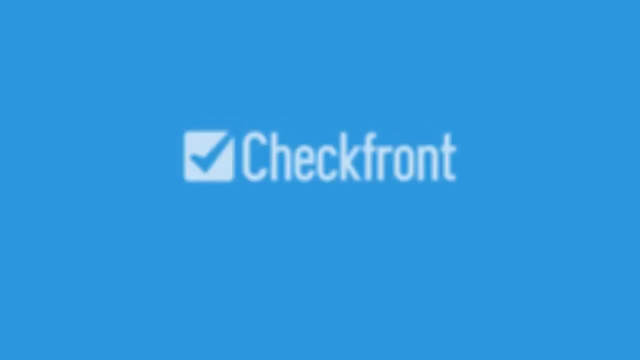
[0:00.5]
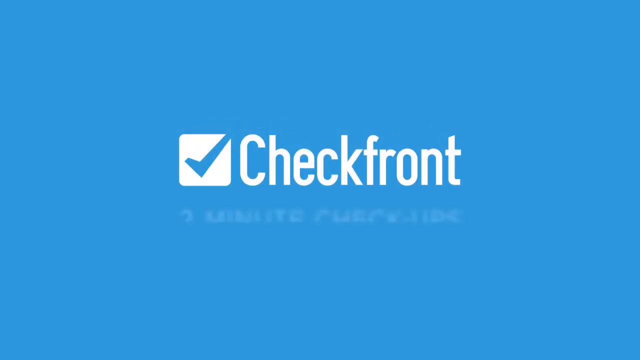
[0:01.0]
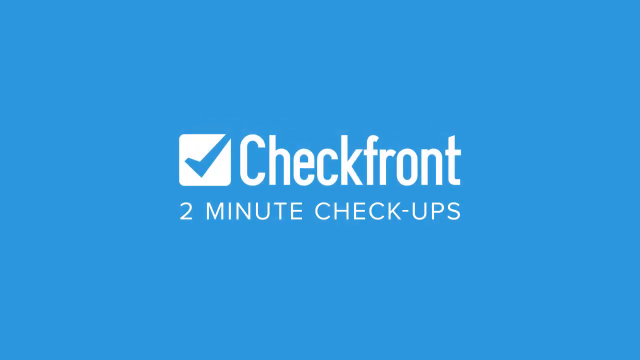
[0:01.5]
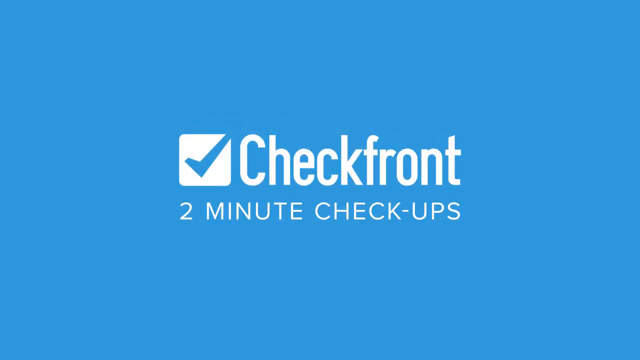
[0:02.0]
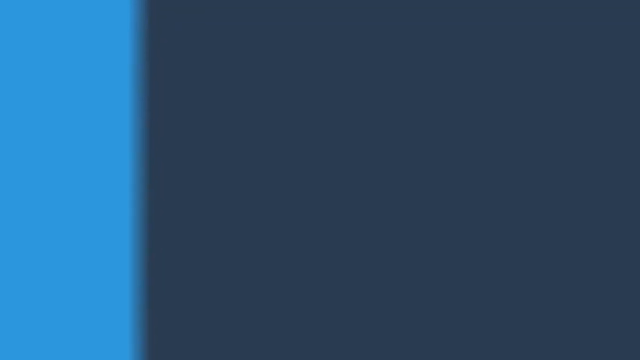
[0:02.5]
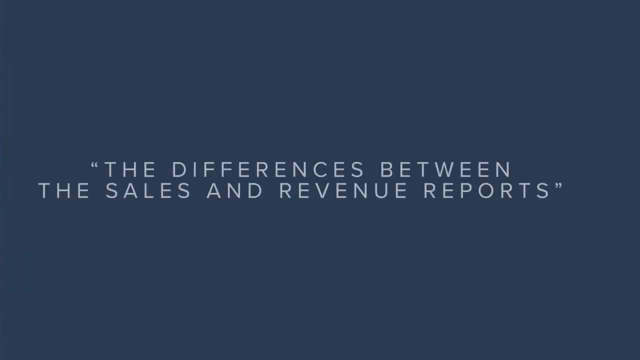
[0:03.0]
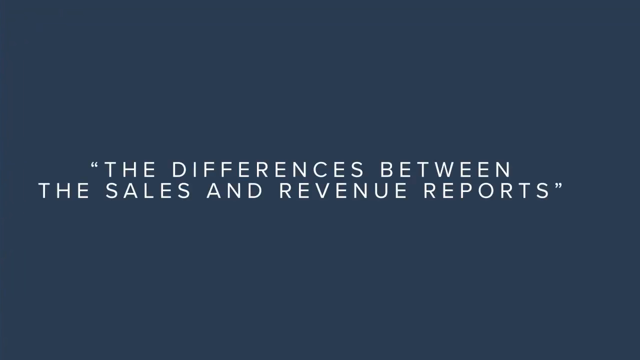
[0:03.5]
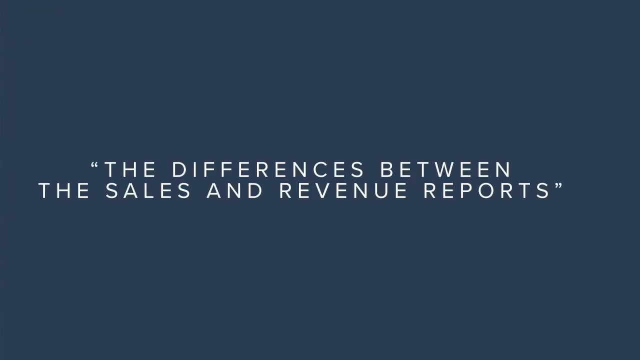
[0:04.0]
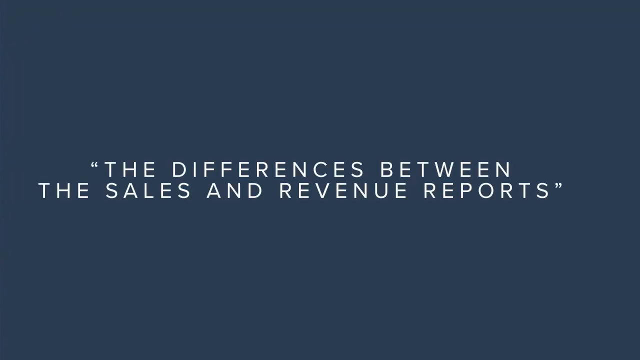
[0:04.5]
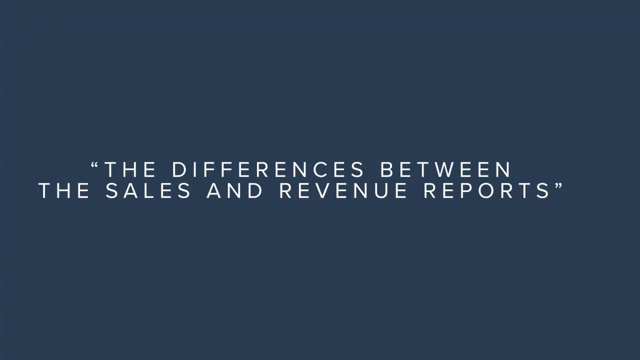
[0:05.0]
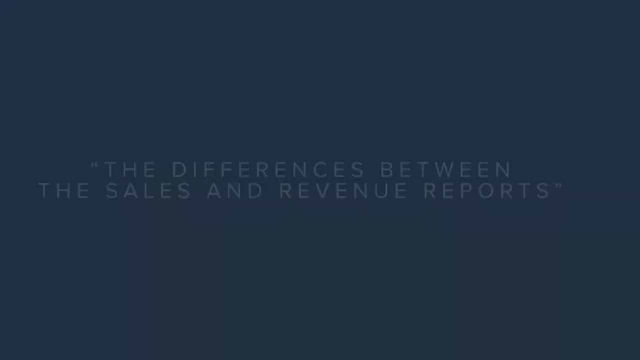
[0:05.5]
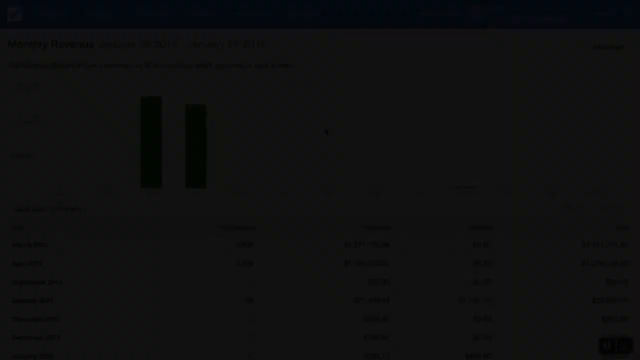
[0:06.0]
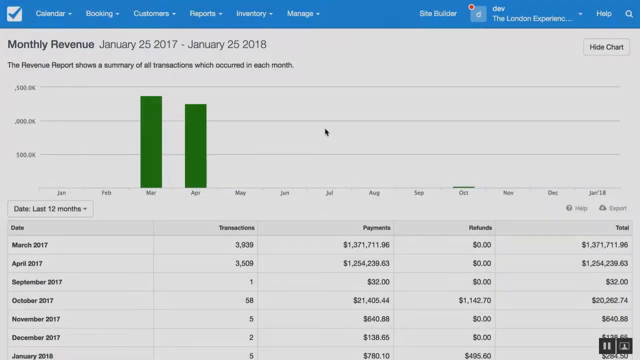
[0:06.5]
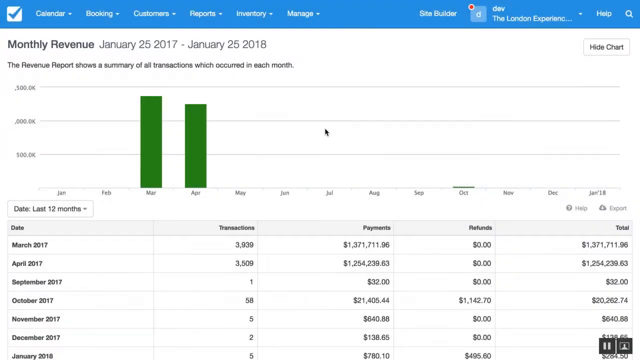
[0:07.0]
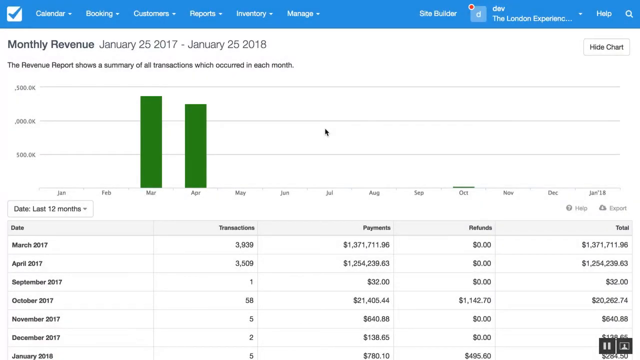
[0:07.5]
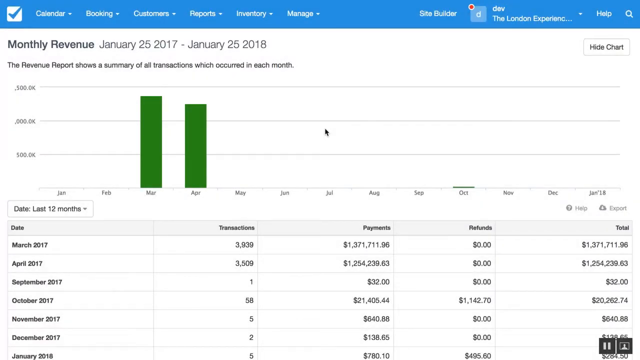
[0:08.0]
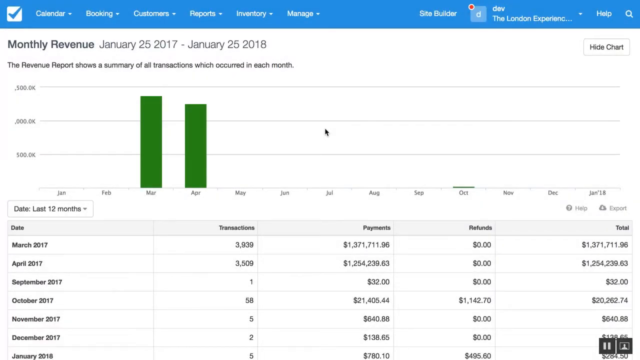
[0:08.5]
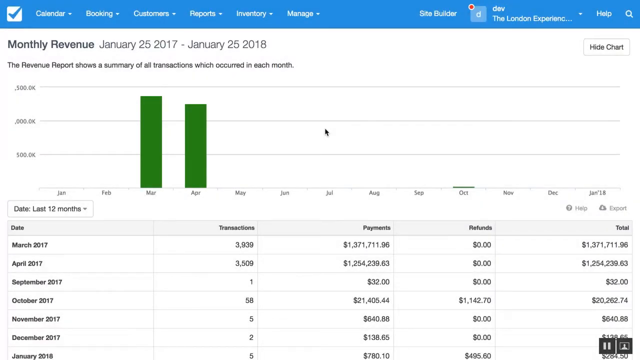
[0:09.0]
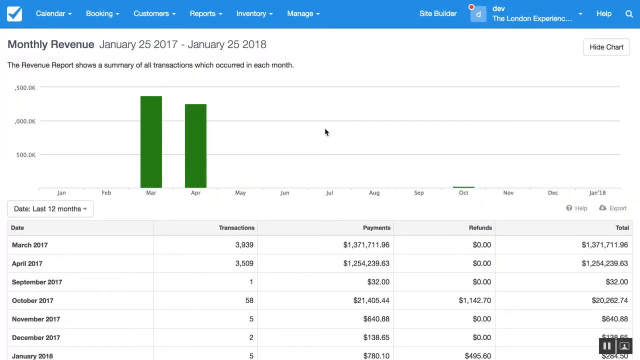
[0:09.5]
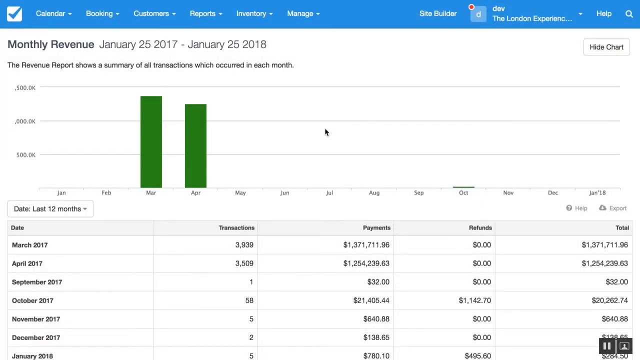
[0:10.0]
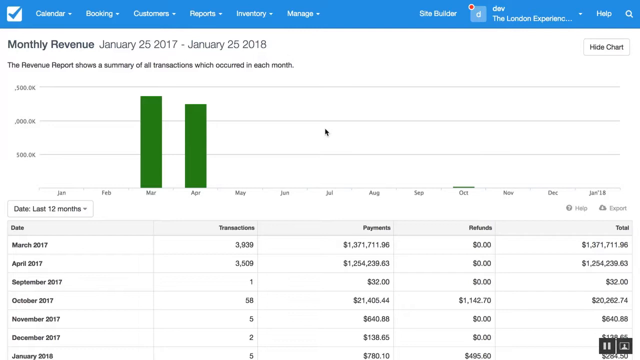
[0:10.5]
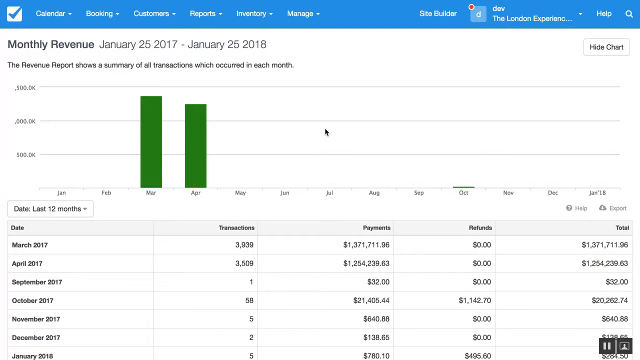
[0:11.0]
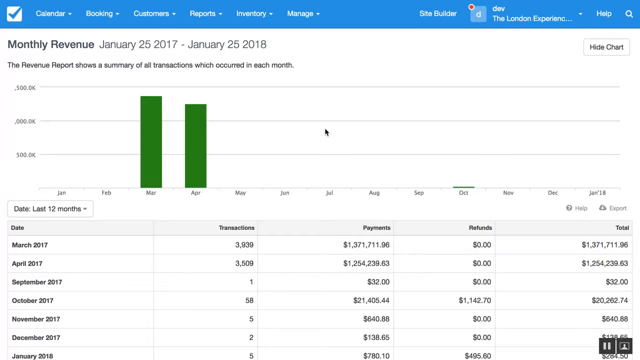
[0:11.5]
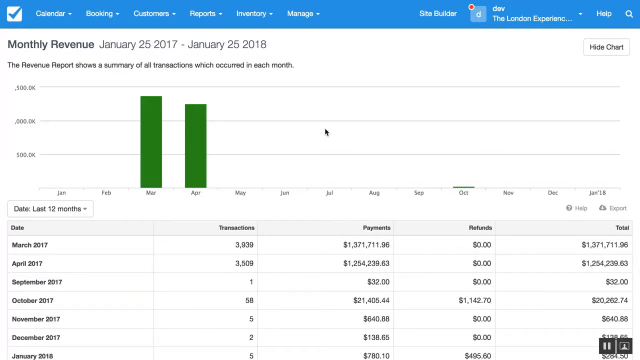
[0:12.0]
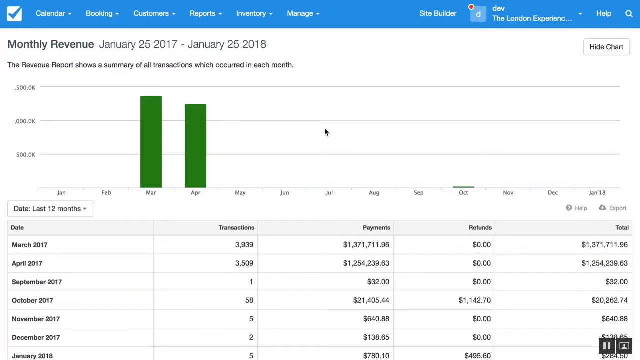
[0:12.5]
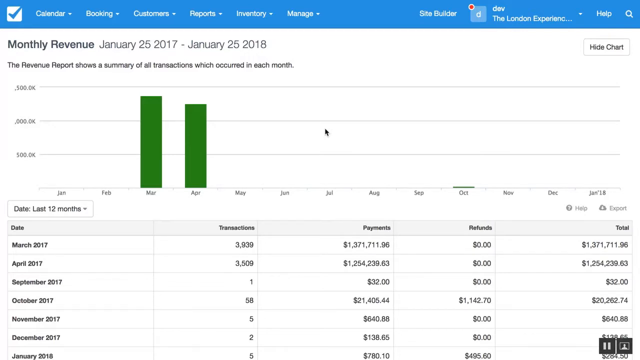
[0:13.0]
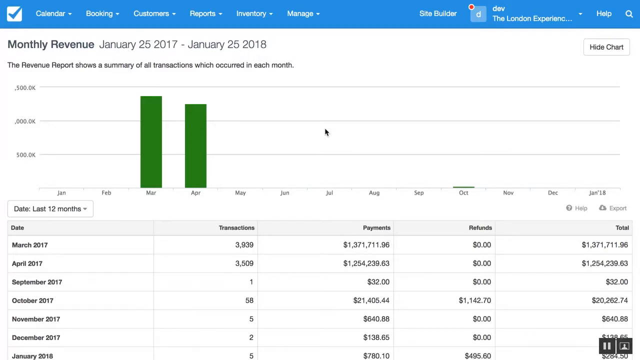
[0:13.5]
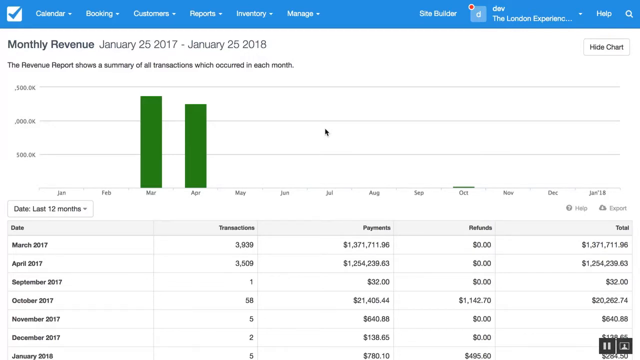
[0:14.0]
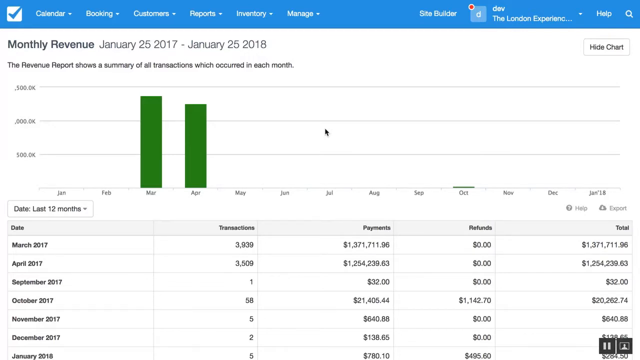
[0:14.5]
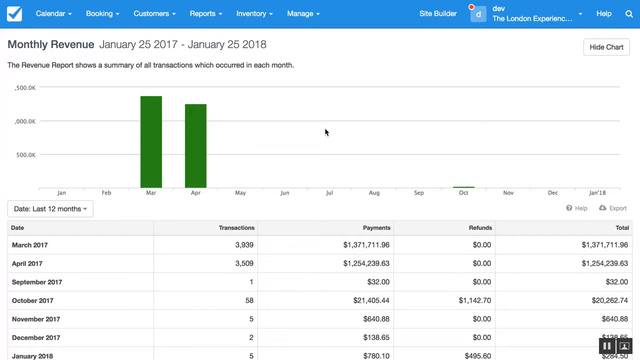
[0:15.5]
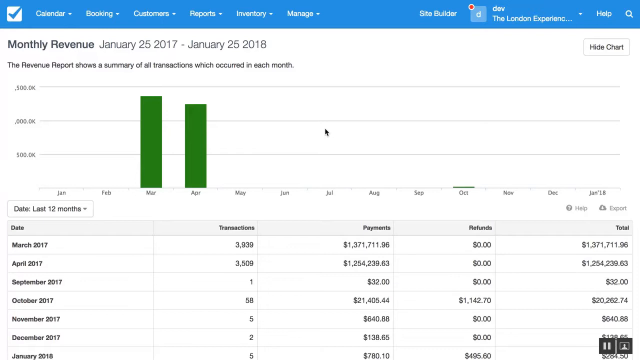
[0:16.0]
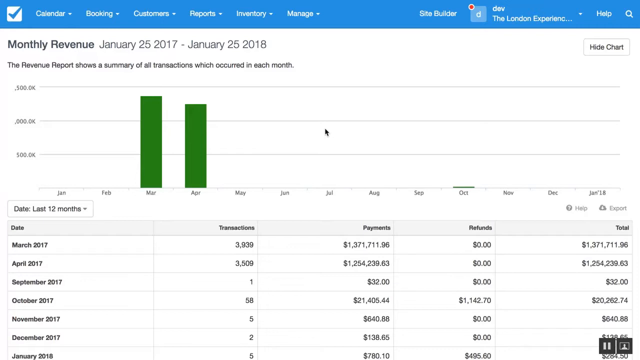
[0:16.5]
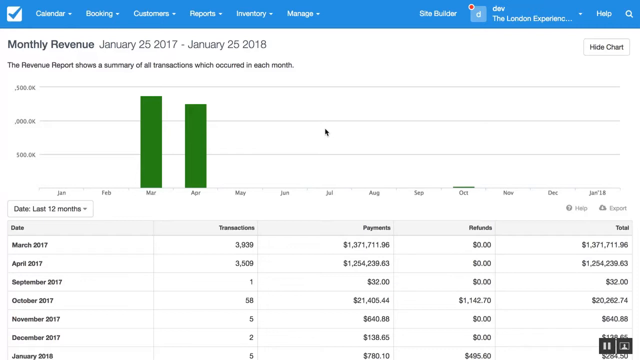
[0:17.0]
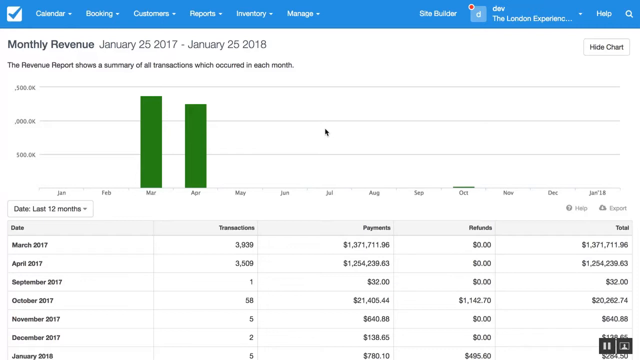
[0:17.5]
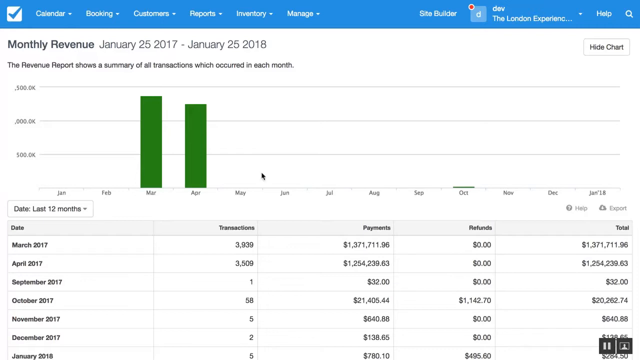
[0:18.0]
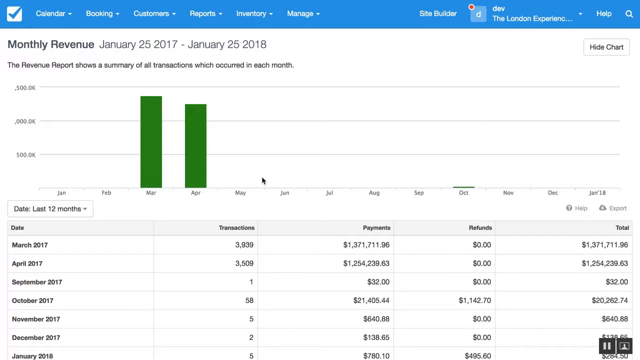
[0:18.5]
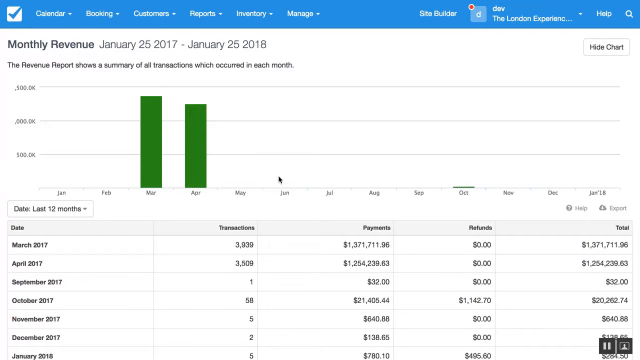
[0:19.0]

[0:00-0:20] A light blue background shows a logo in the middle that says "Check Front," with the words "two-minute checkups" underneath. Words then appear in the middle reading "the differences between the sales and revenue reports." Next, an opened page appears. In the top left area is a row of six items to click: "Calendar," "Booking," "Customers," "Reports," "Inventory," and, last on the right, "Manage." The page is open to show the monthly revenue between January 25th, 2017 and January 25th, 2018. A bar graph in the upper area shows only two green bars, for March and April, with the March bar slightly higher than the April bar. On the bottom are dates showing the transactions, payments, refunds, and totals for the last 12 months.